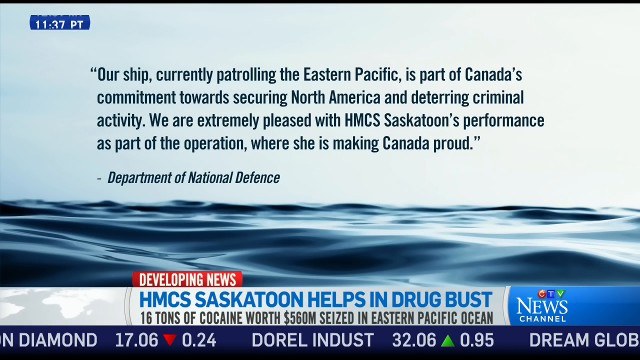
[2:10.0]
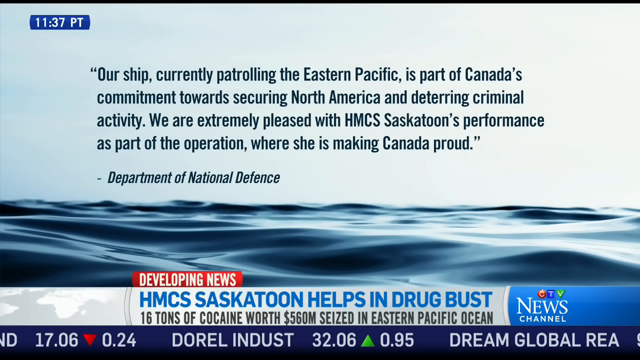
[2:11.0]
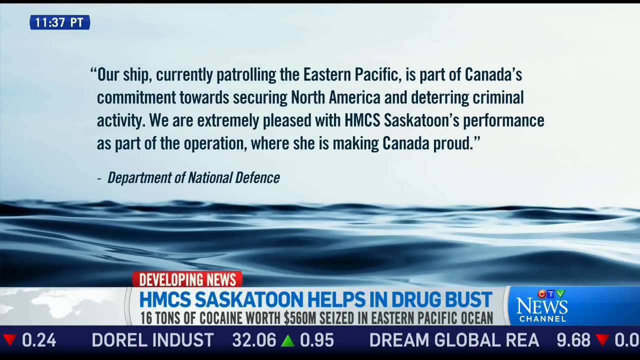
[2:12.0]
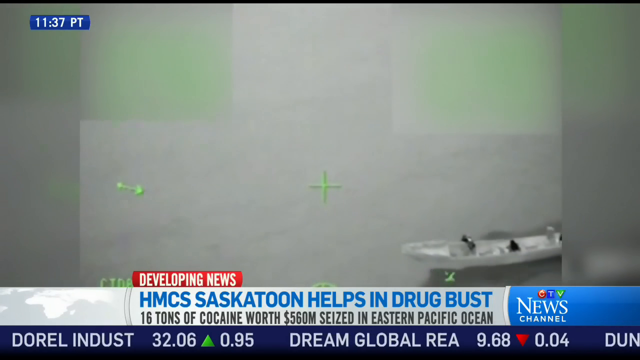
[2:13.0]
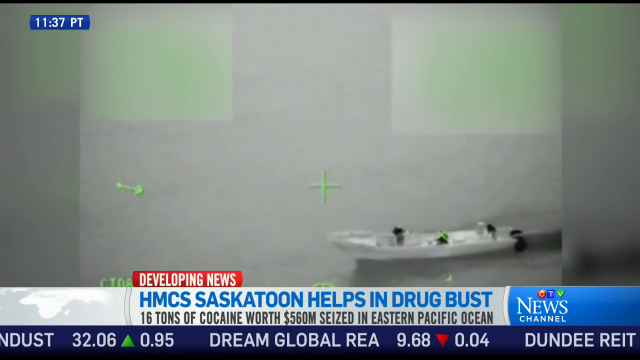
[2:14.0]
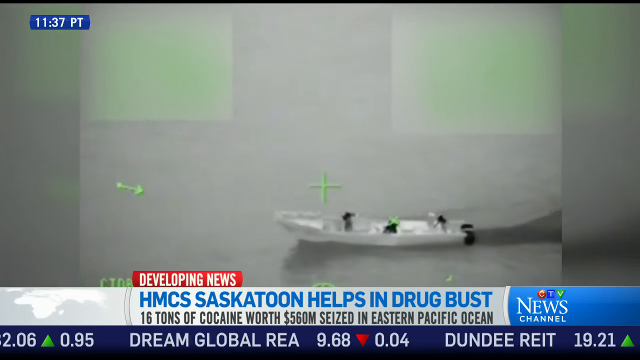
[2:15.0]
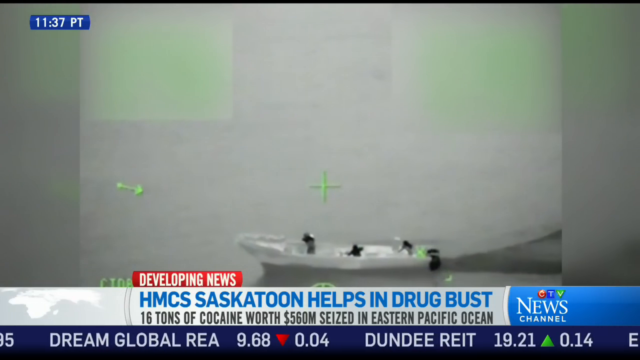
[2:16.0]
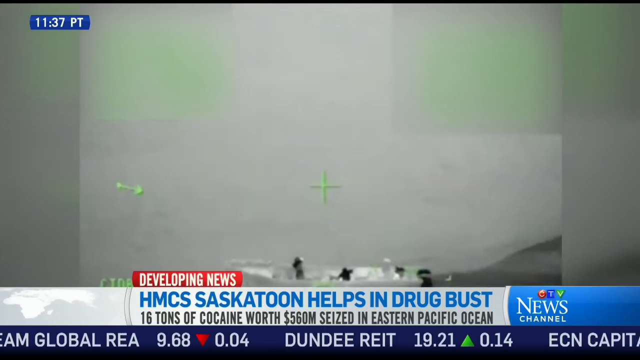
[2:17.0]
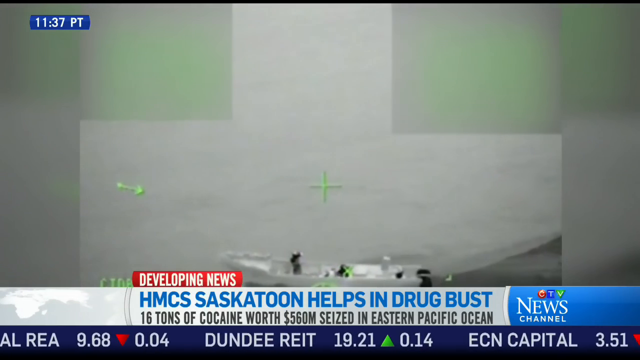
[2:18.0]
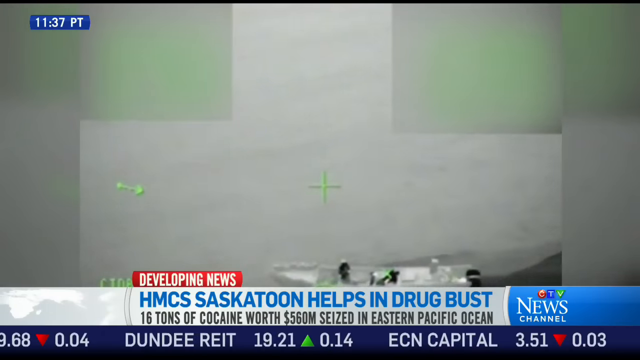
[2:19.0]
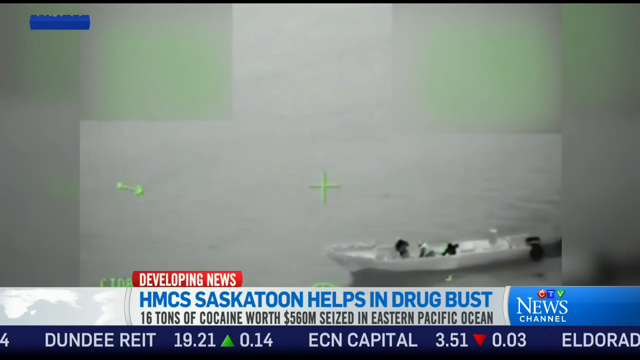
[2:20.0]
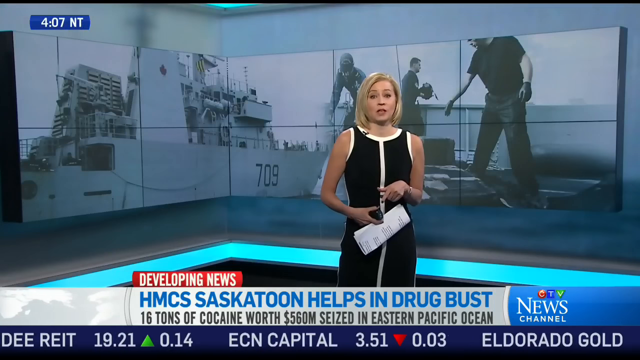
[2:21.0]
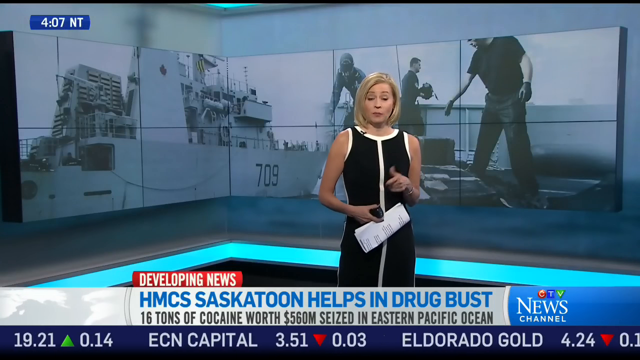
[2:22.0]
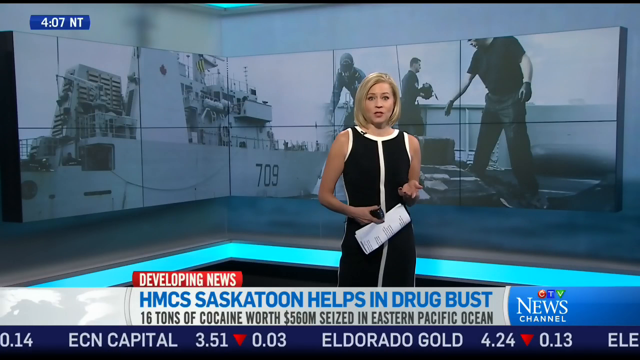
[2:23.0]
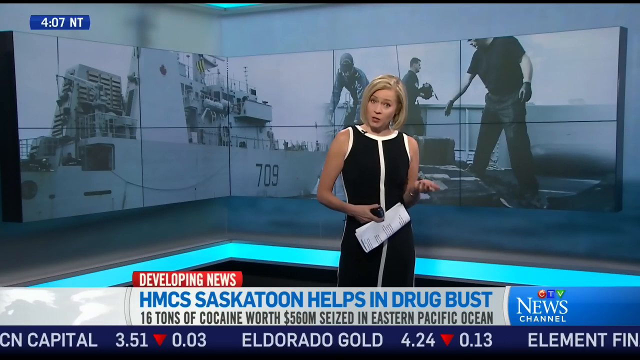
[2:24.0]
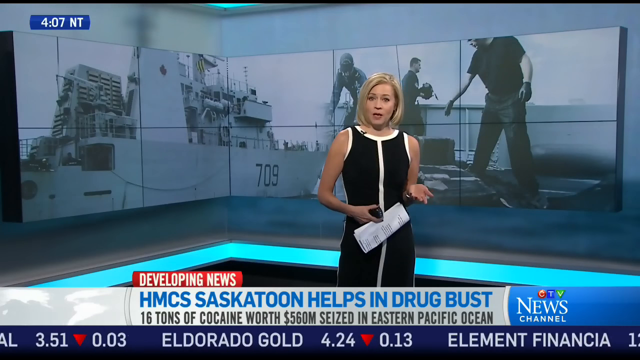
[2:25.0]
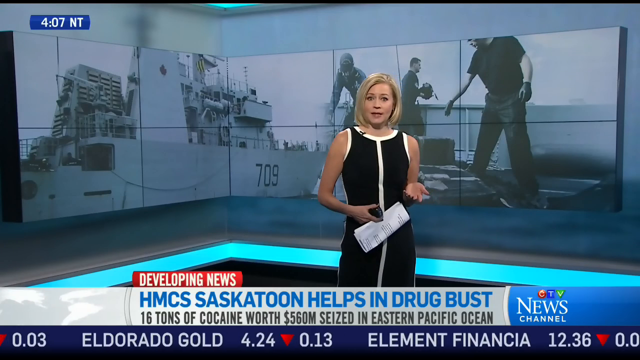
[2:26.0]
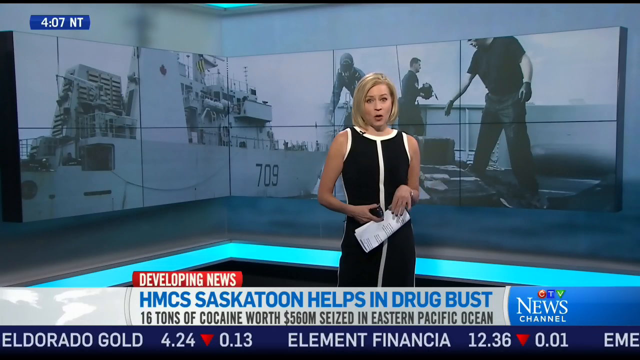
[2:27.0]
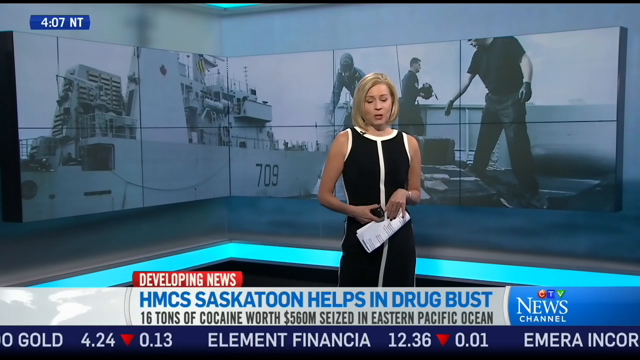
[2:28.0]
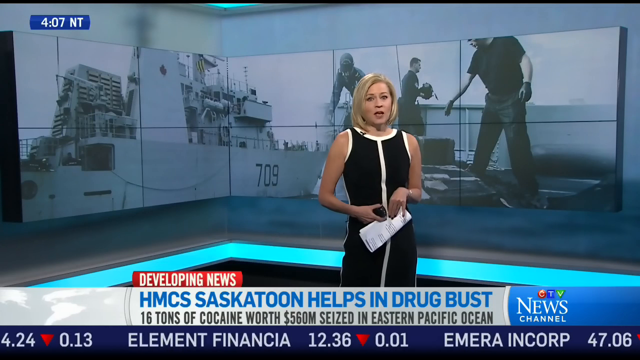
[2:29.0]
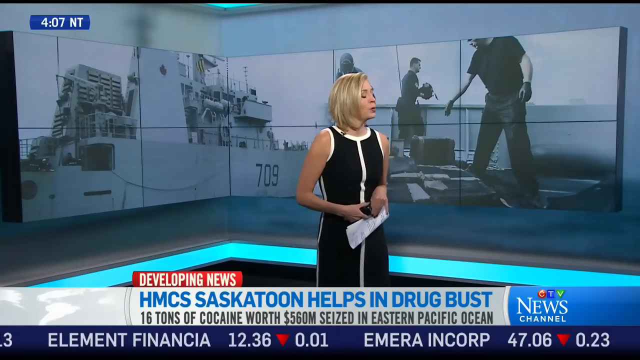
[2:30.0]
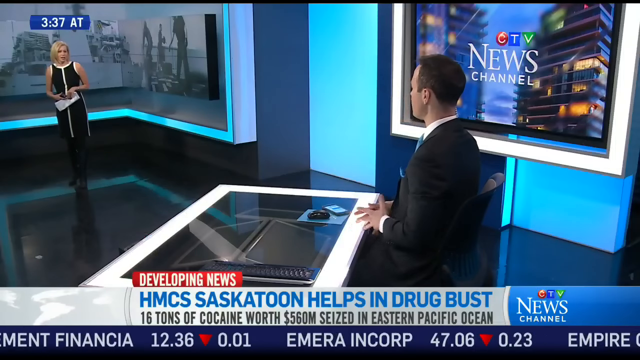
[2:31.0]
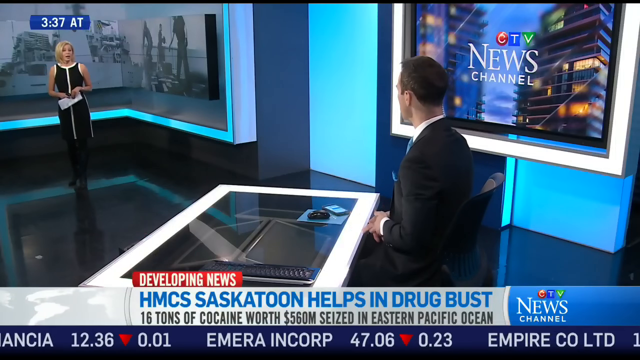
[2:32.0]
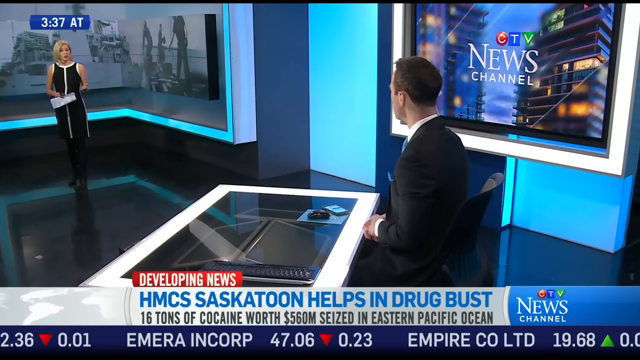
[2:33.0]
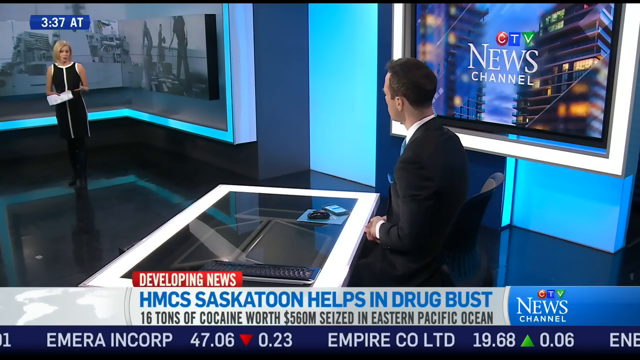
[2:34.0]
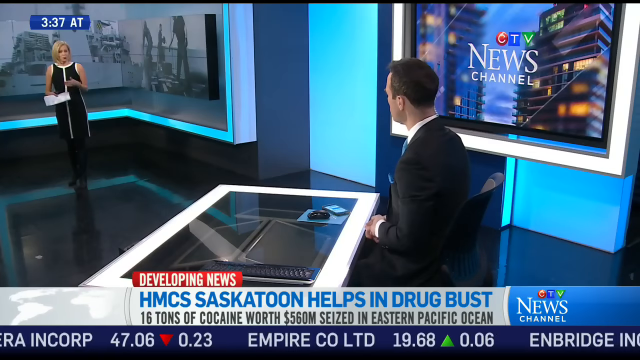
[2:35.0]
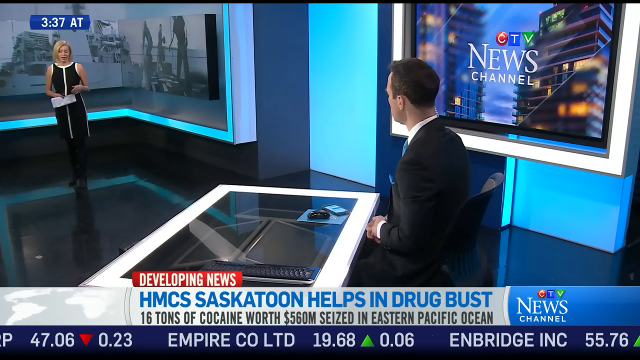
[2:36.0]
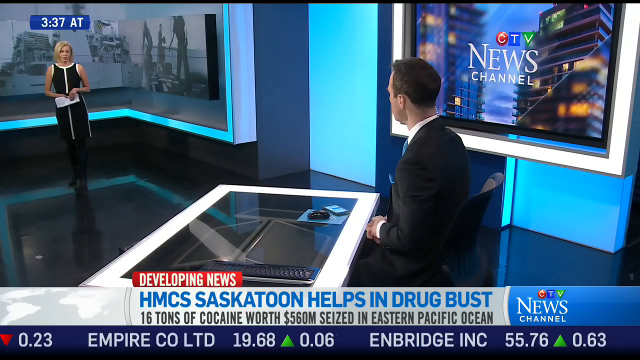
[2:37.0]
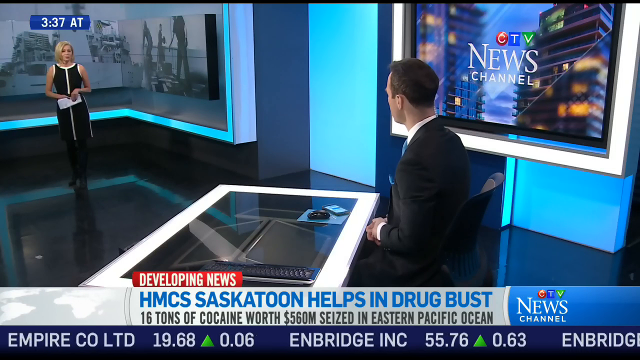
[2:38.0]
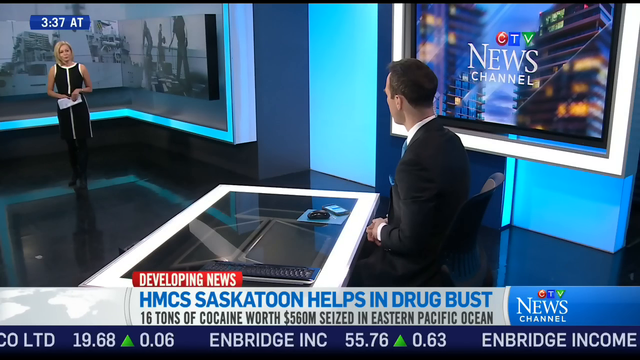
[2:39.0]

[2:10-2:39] An image of a quote, on a background that is blue like a sky with some water underneath, reads "our ship currently patrolling the eastern Pacific as part of Canada's commitment to securing North America and deterring criminal activity, we are extremely pleased with HMCS Saskatoon's performance as part of the operation where she is making Canada proud," attributed to the Department of National Defense. The ticker at the bottom reads "developing news HMCS Saskatoon helps in drug bust 16 tons of cocaine worth 560 million seized in the eastern Pacific Ocean." Another image from the Coast Guard follows, from a blurry camera, showing a little boat moving to the left. The video goes back to the female news anchor in a black dress with a white stripe in the middle and white around the collar and sleeves; she talks to the screen, moving her hand, with a piece of paper in her hand. The camera pans back to the other anchor at the desk in the suit, white shirt and blue tie, and then to an angle showing both the man at the desk and the woman.